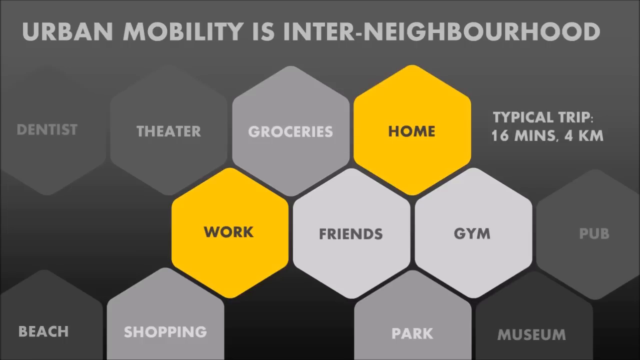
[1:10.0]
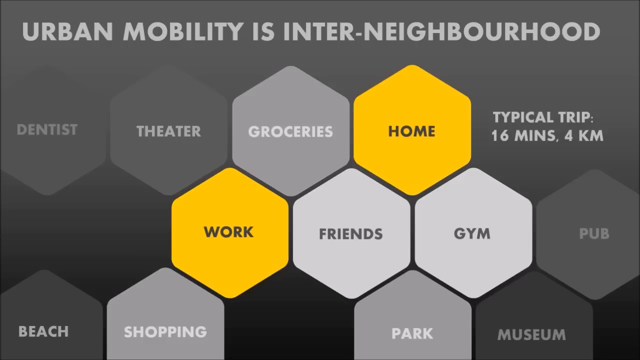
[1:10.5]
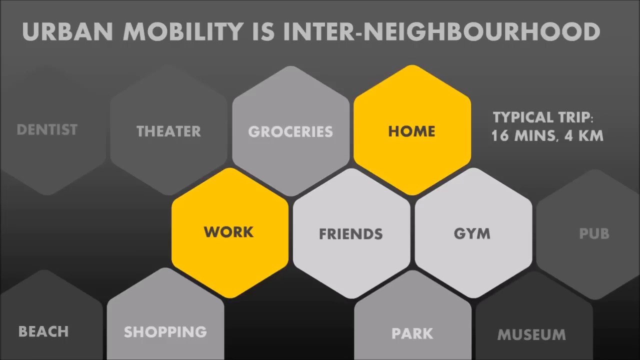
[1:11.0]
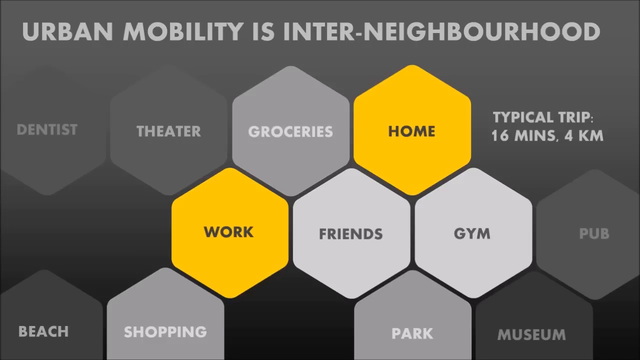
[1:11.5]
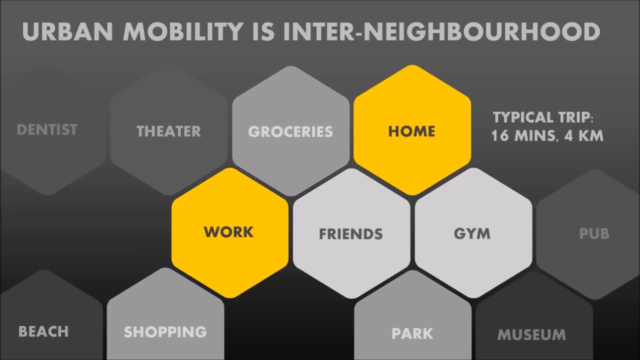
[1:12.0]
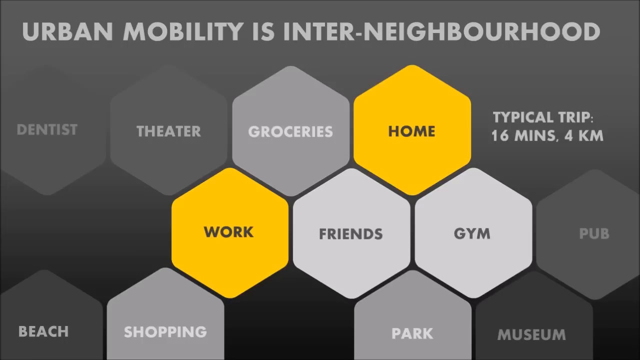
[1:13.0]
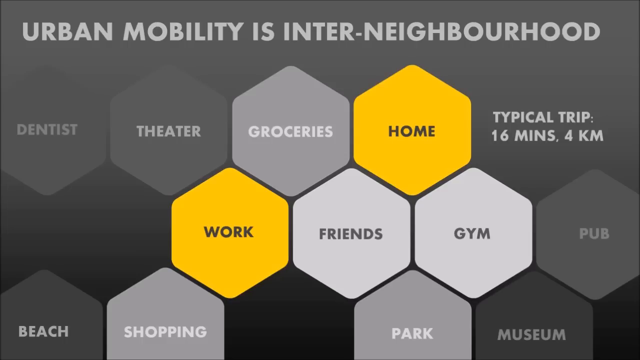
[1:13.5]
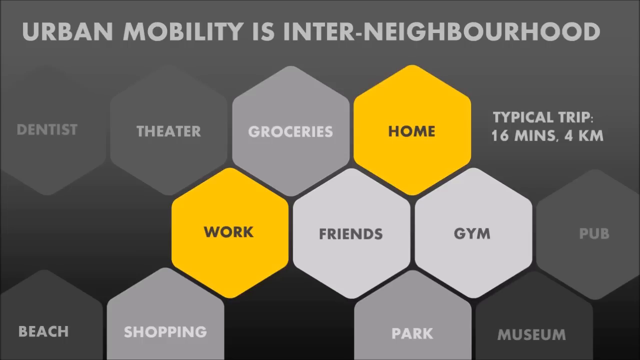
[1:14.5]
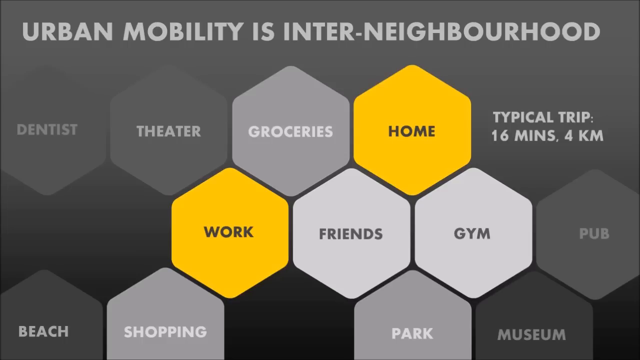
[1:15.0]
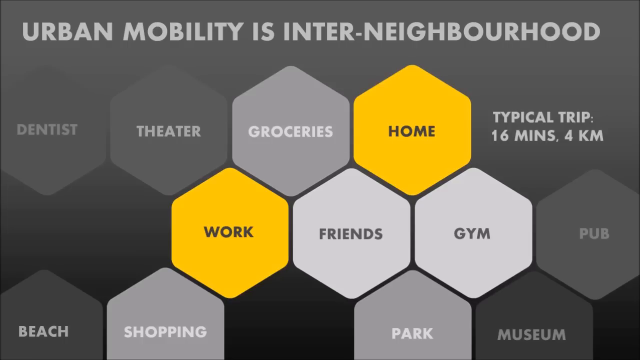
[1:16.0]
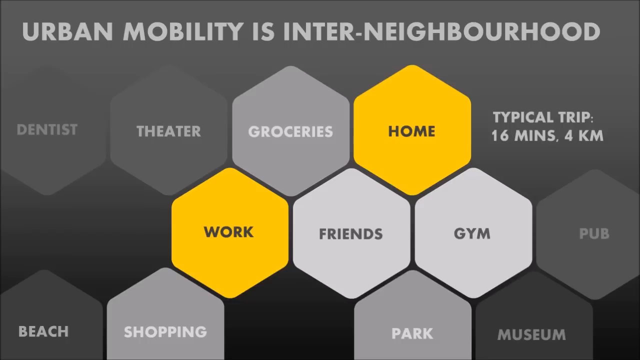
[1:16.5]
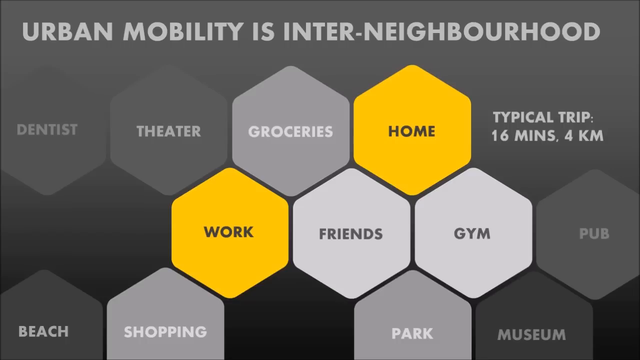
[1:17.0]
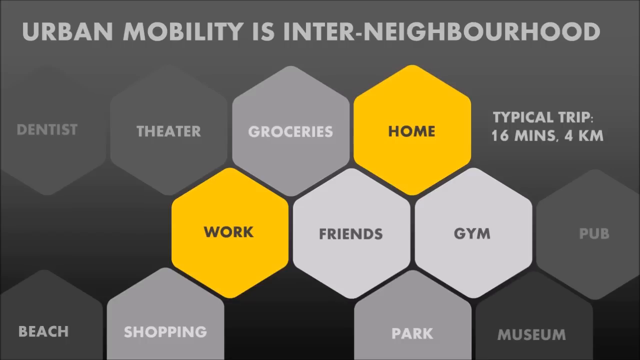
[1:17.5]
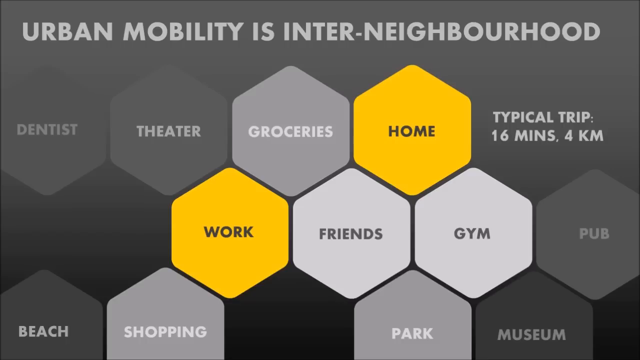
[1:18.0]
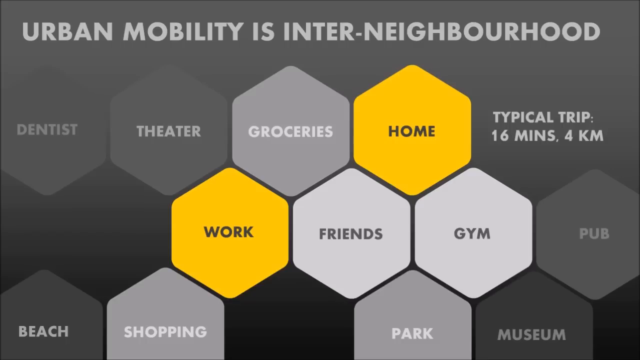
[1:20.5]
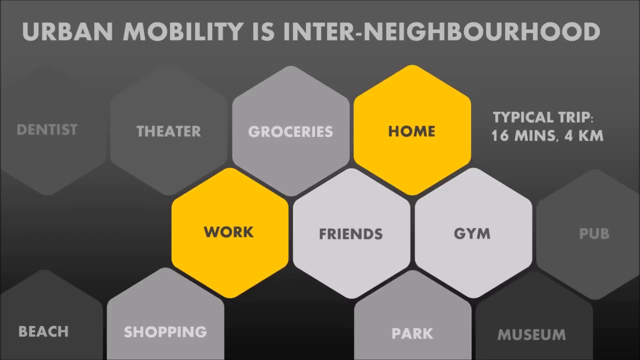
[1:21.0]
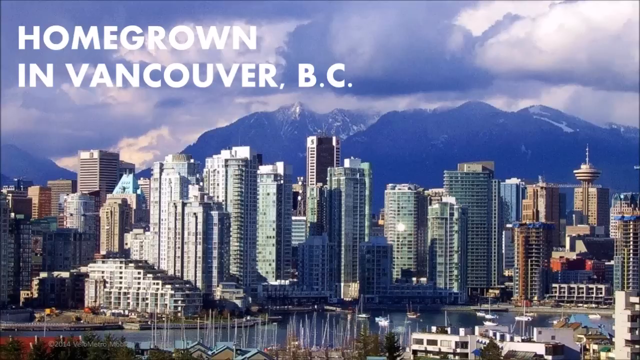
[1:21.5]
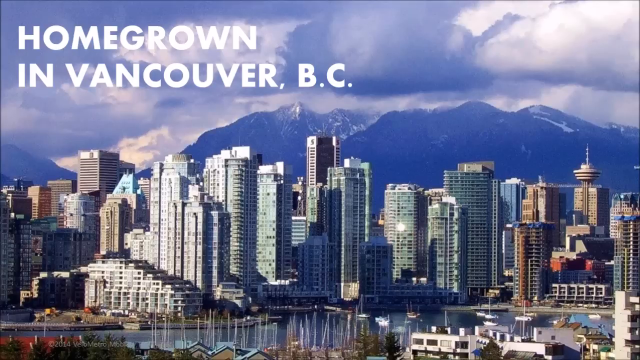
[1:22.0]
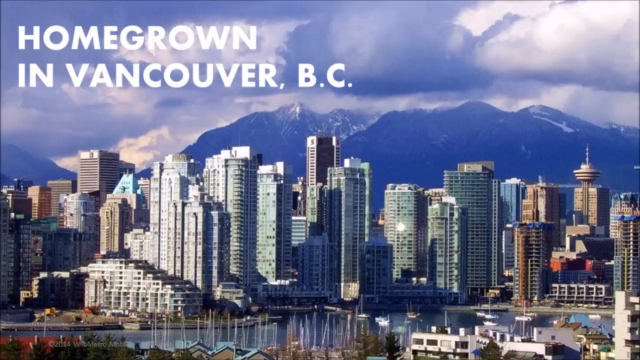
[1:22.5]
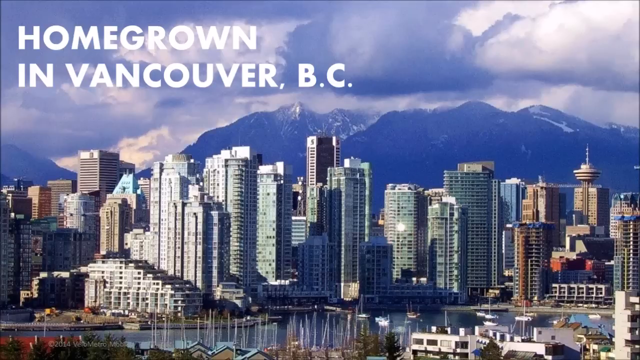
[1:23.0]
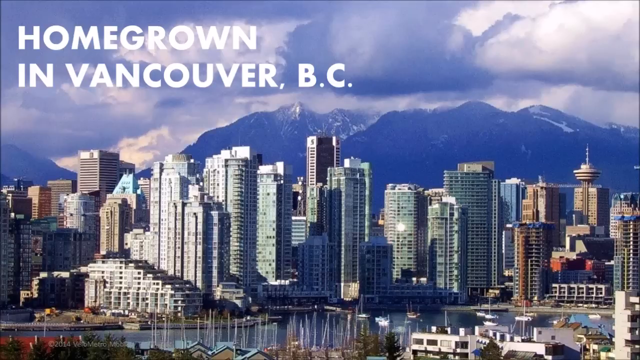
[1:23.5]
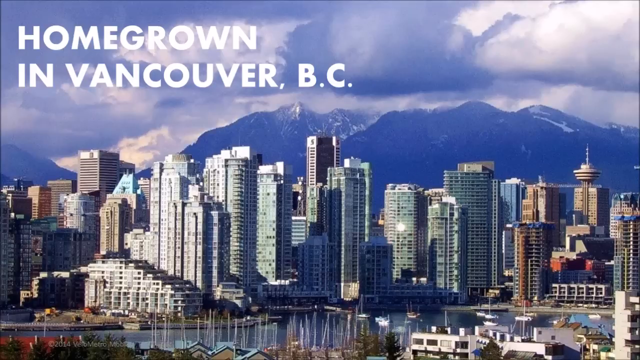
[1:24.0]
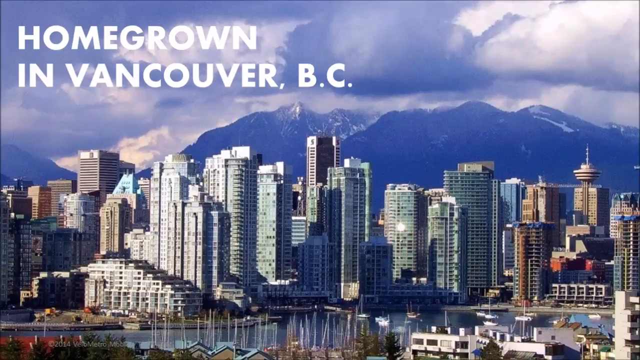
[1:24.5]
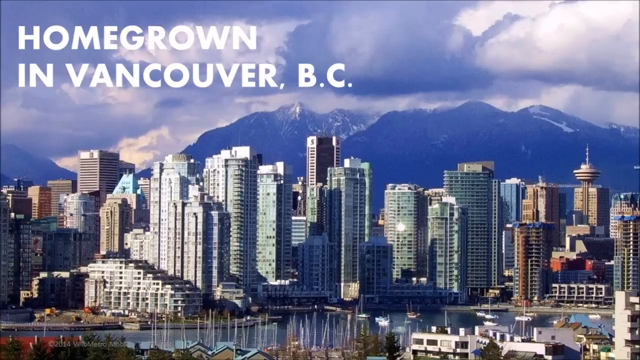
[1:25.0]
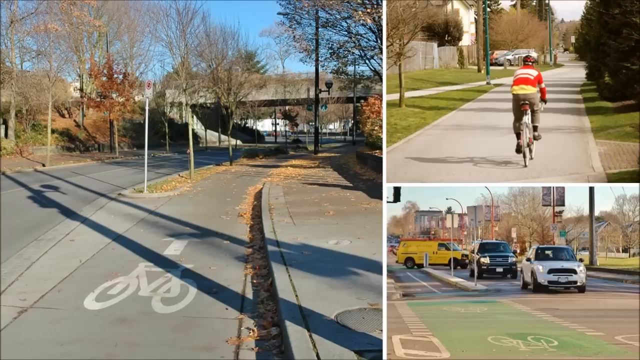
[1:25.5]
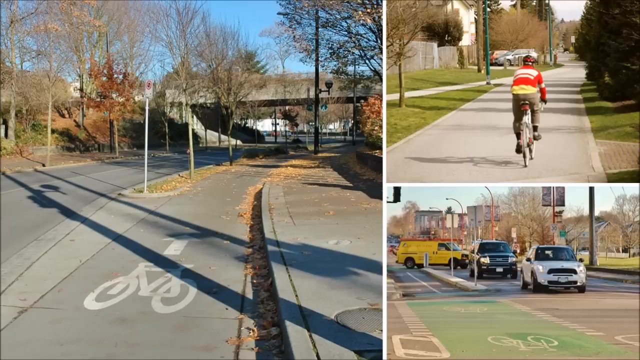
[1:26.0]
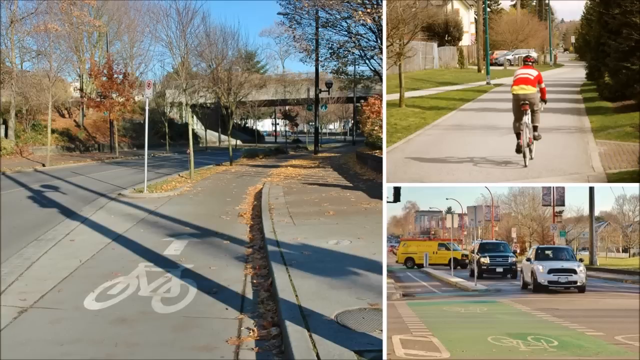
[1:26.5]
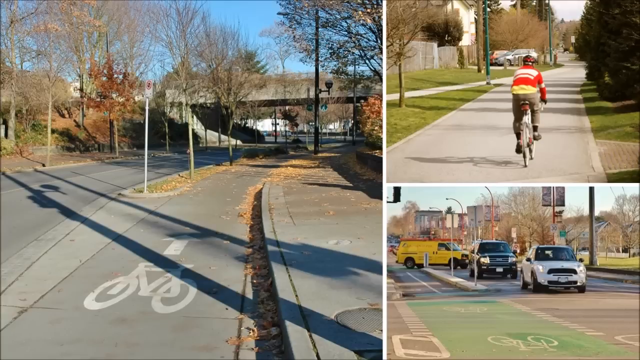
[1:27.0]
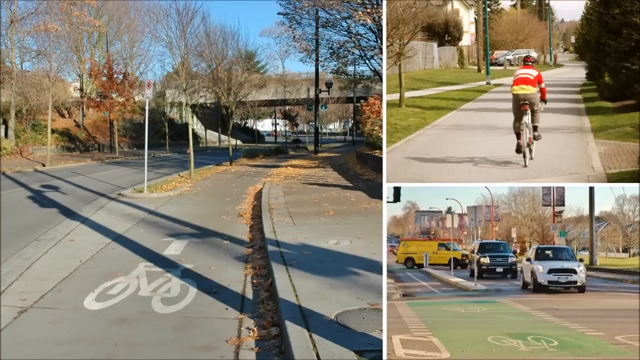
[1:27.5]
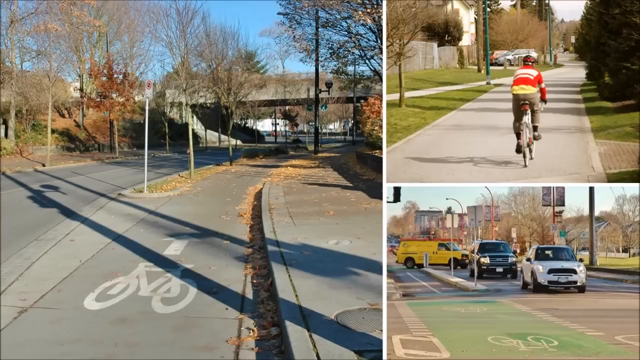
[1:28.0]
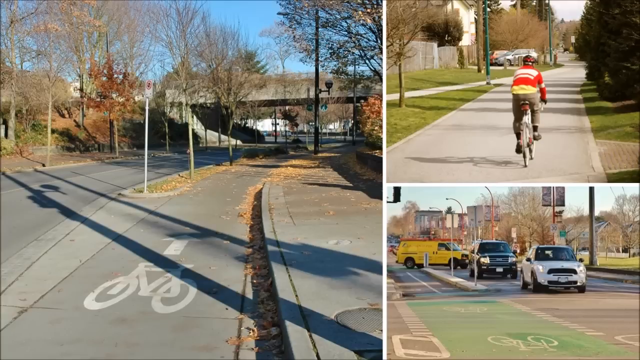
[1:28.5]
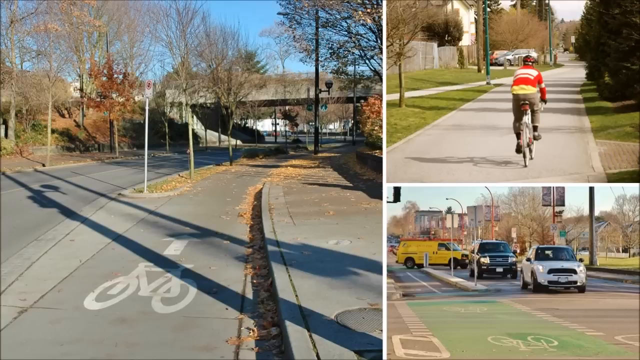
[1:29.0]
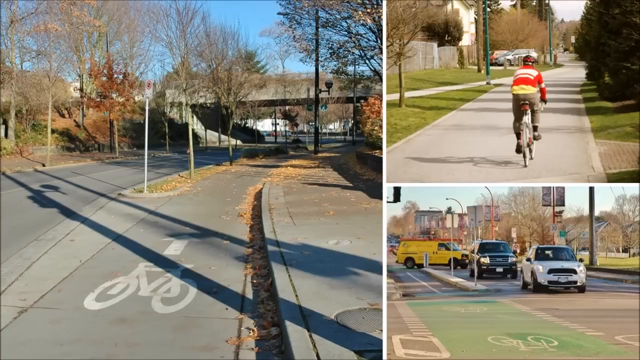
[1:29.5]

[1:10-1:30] A page reads "urban mobility is inter-neighbourhood" and shows honeycomb-shaped pieces labeled dentist, theater, groceries and home. Text reads "homegrown in Vancouver, BC." A British Columbia city appears against the mountains under a very gray, dark sky, with very tall buildings and many skyscrapers. A split screen shows a city street with a big bike lane that goes under an overpass, with leaves falling, apparently in fall. Another part of the split screen shows somebody using a big wide bike path, and underneath it is a picture of two cars driving in the city, with what looks like a yellow van following them through the streets.